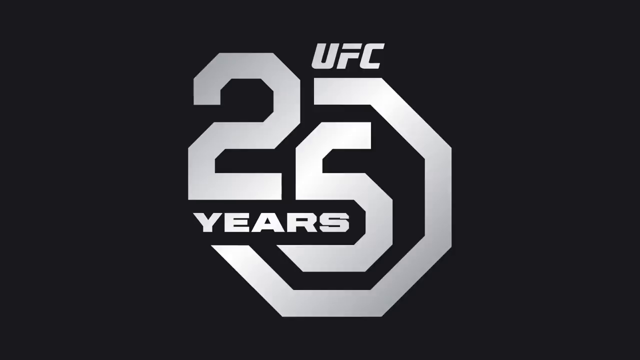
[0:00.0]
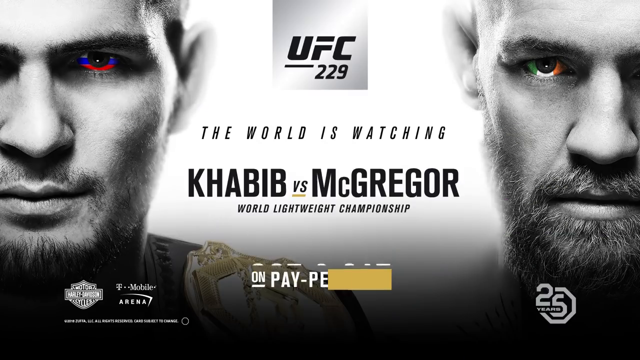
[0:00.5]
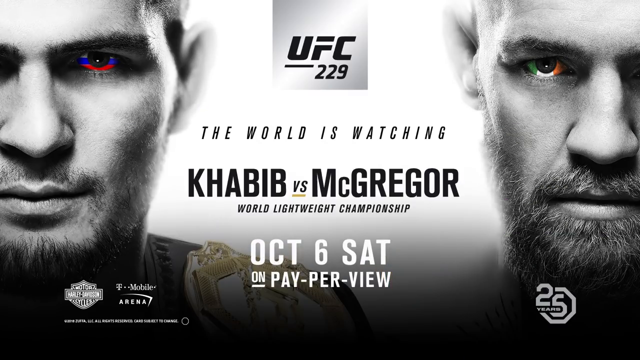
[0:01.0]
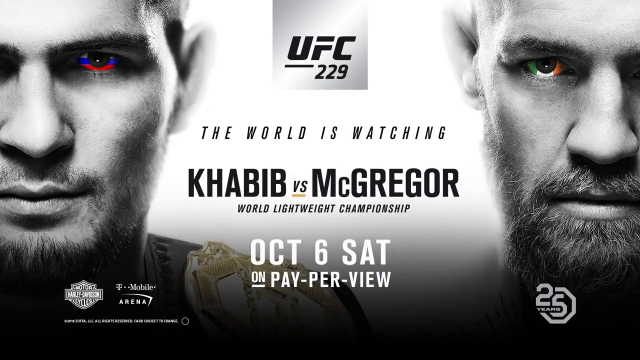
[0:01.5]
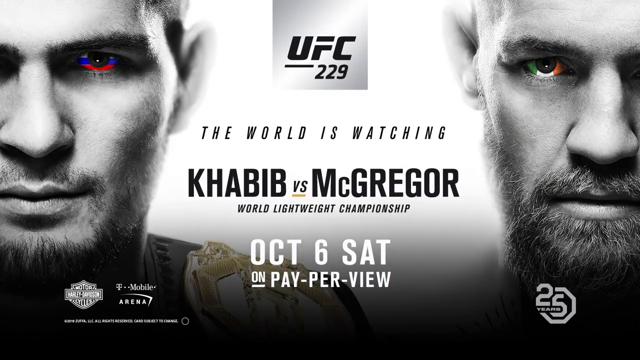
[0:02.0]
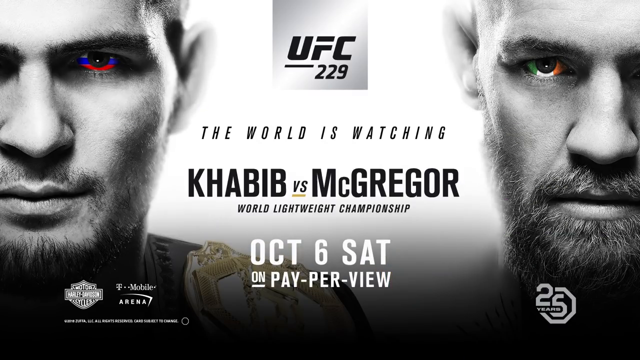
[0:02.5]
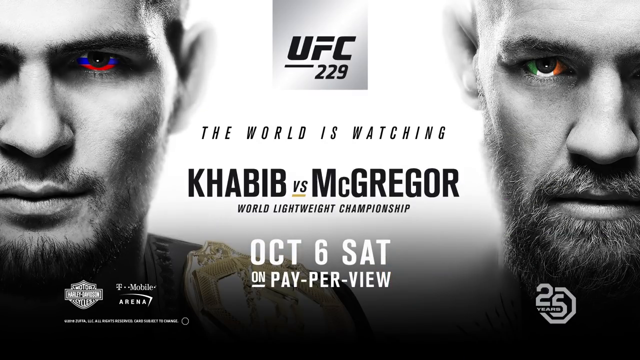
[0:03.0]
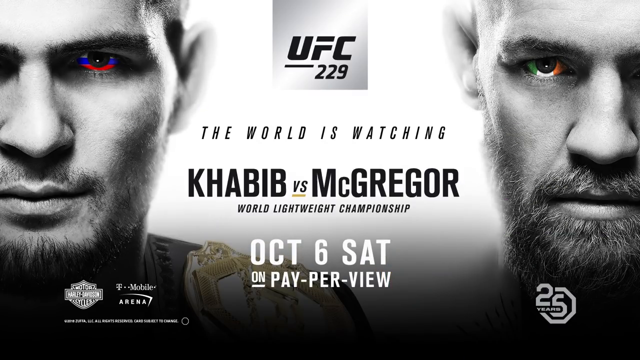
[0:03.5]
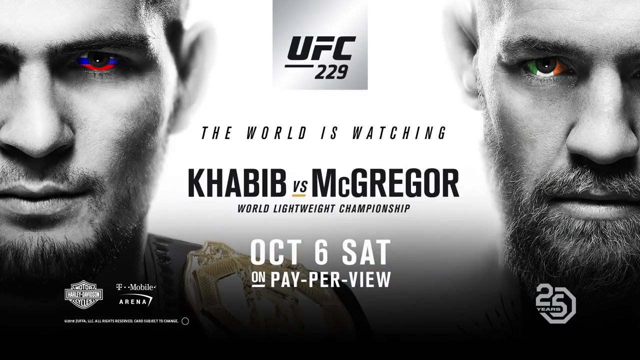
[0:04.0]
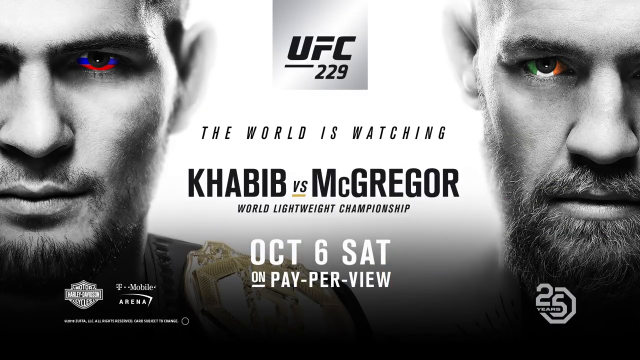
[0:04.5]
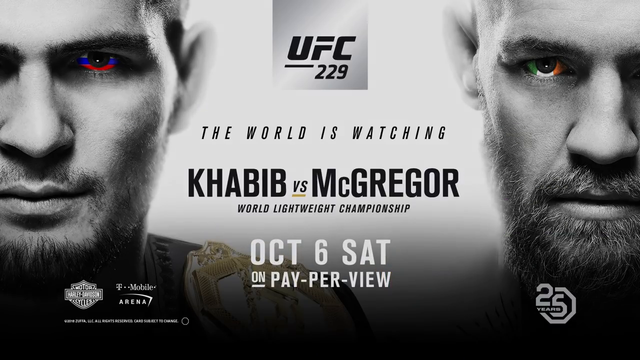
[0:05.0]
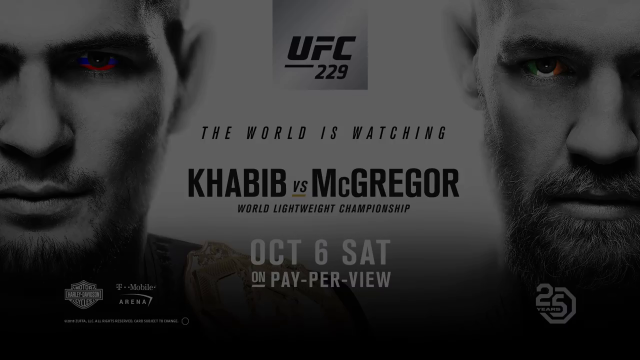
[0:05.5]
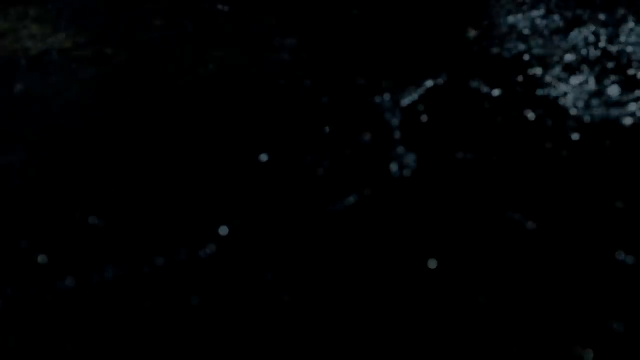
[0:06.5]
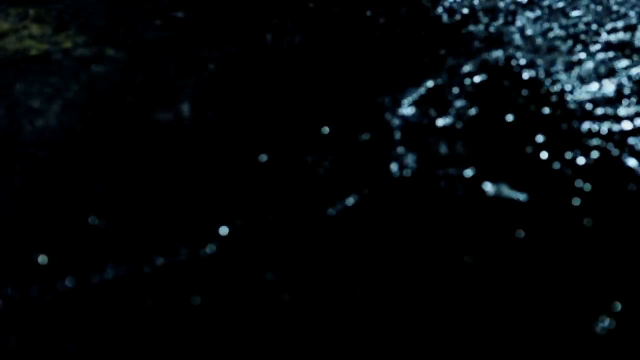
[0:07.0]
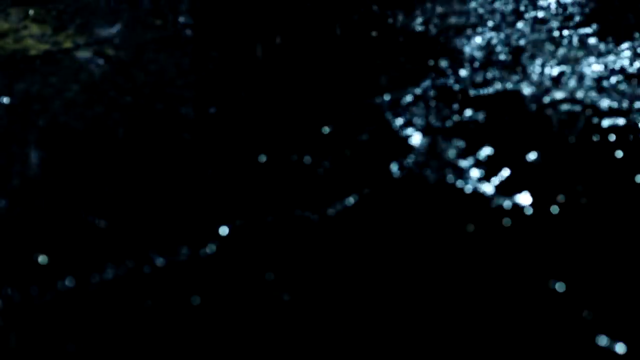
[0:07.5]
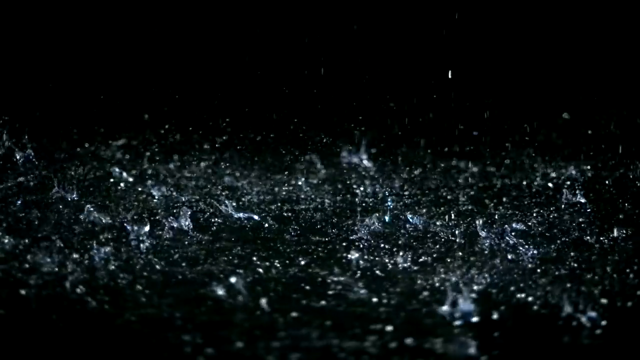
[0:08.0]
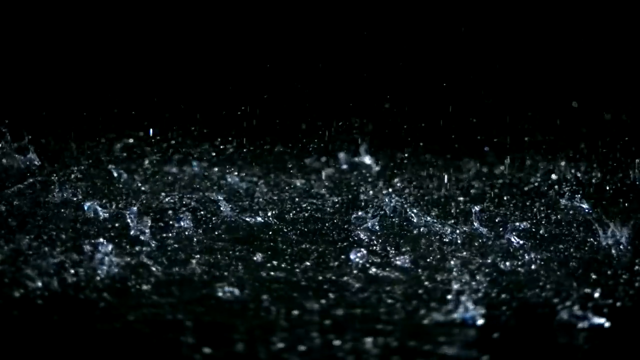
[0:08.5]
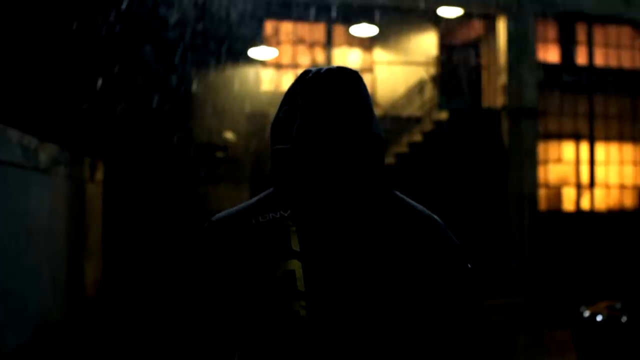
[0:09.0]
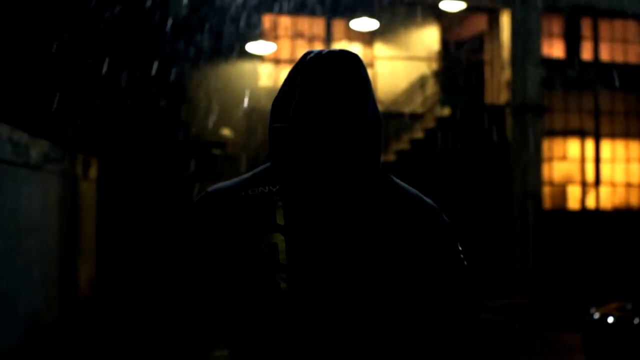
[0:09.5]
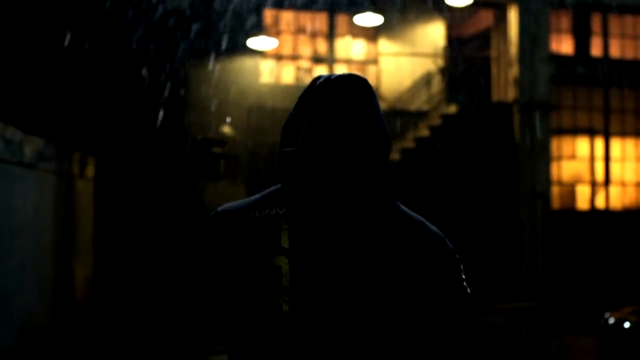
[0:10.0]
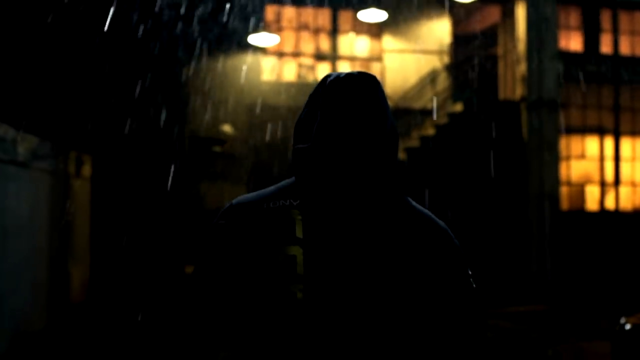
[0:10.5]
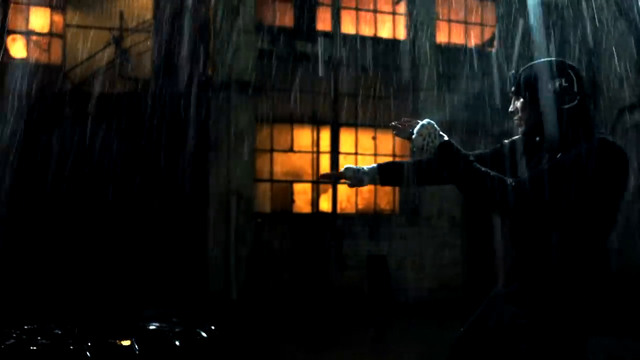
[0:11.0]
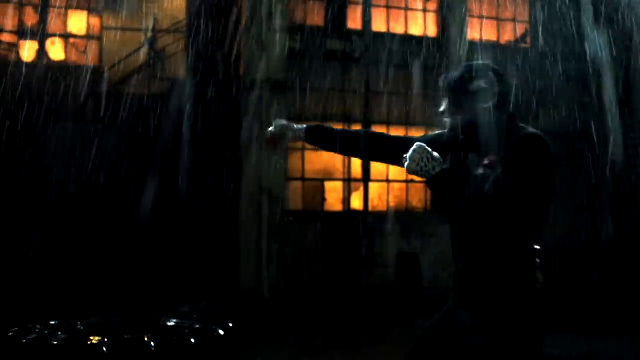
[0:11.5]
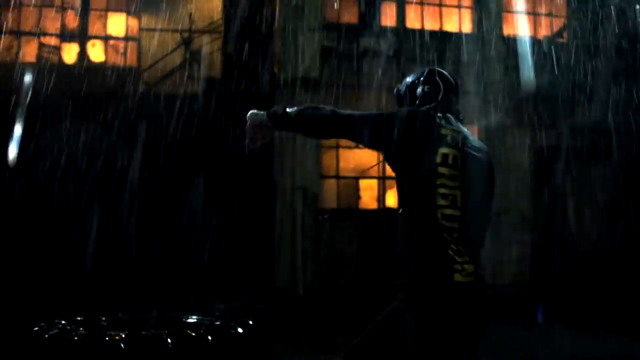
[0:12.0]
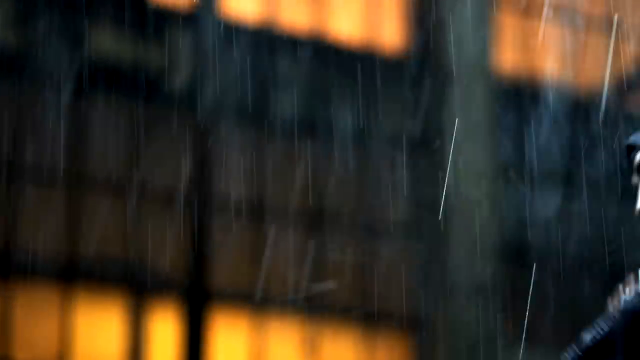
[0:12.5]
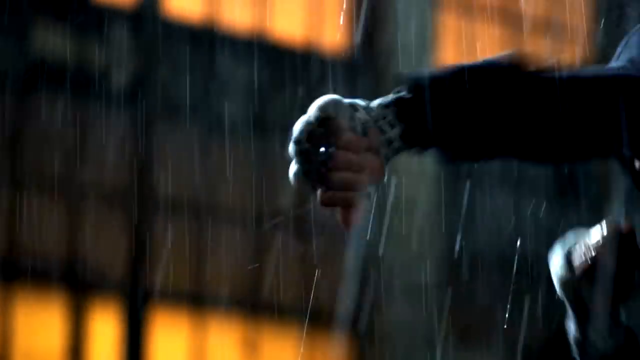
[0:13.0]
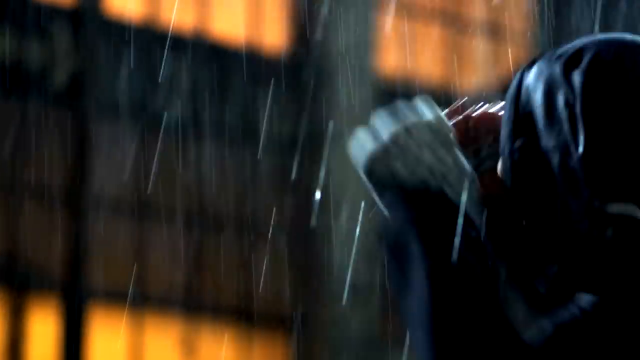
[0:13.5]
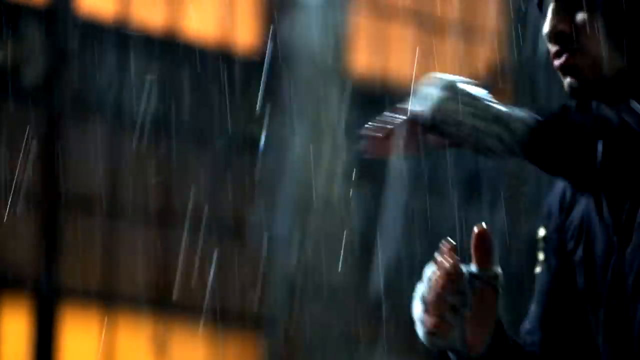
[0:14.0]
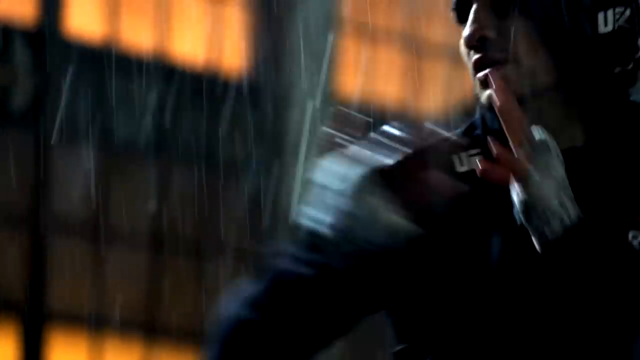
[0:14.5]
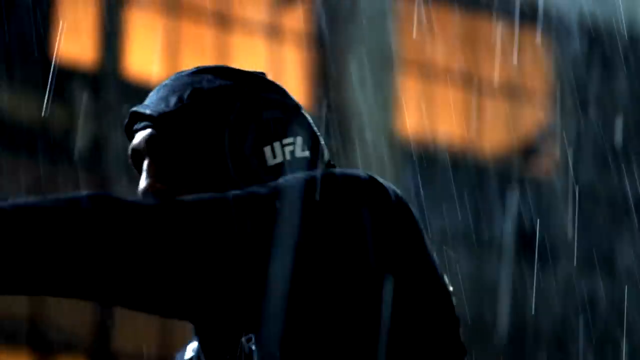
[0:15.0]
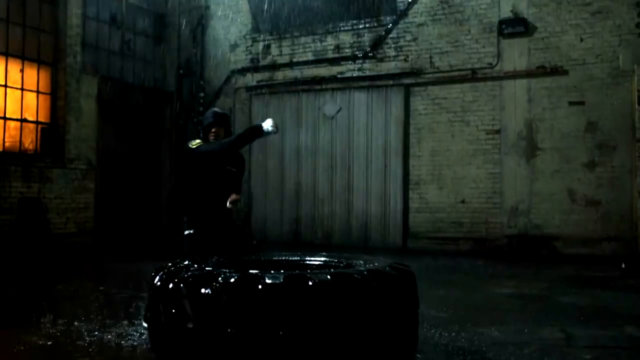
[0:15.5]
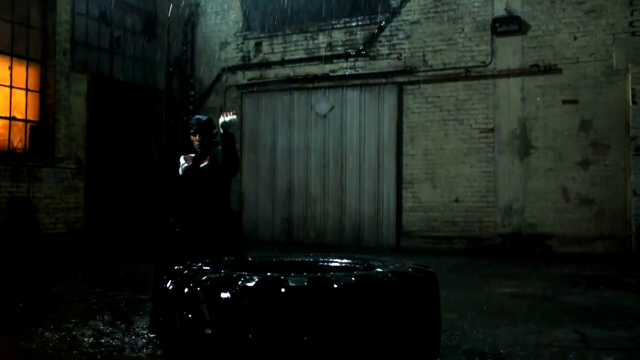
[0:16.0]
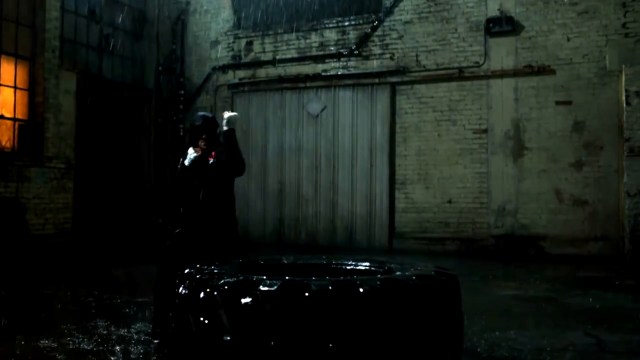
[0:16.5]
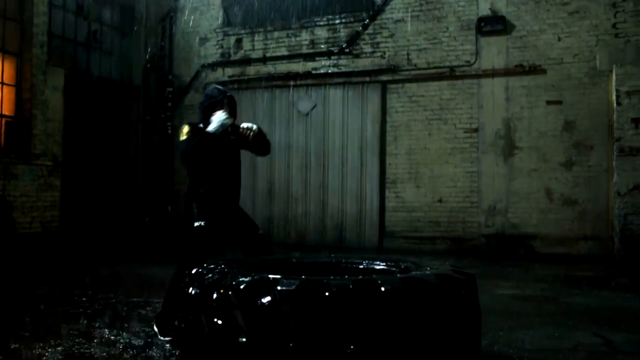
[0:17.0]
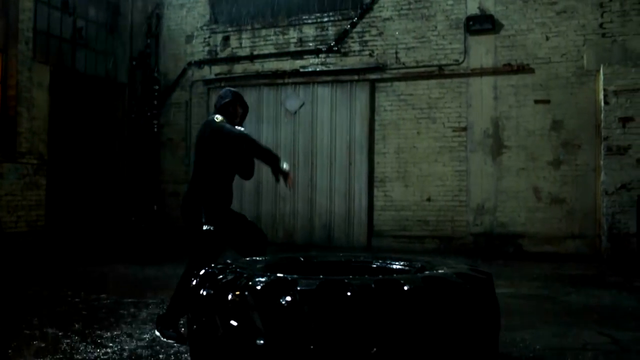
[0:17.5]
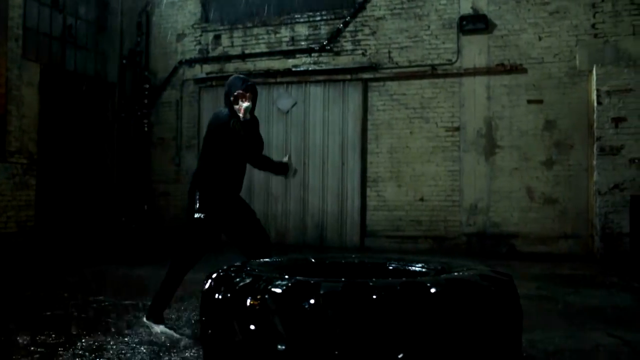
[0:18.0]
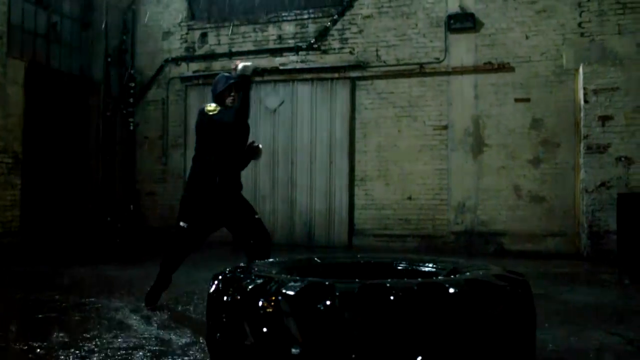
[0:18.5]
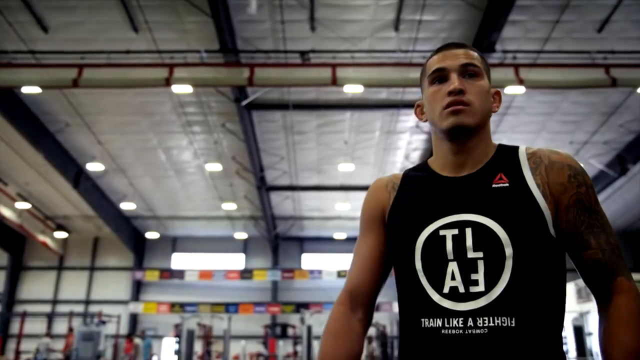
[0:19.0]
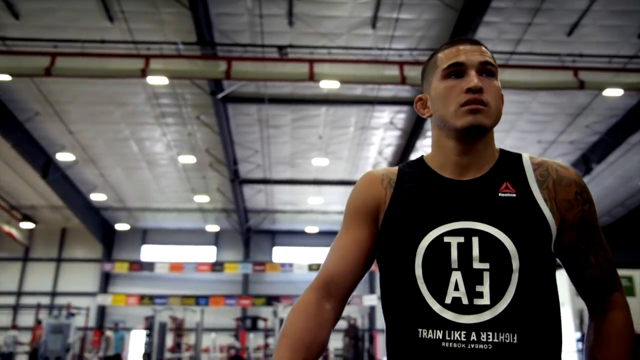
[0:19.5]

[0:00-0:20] The video opens on a black background with "UFC 25 years" in a silver artistic font and what is kind of an icon. A splash screen with a white background follows, showing the faces of two UFC fighters on the left and right of the screen: on the left a man who looks kind of Arab, on the right a bearded white man. At the very top between them is "UFC 229" in black font, below that "the world is watching", below that "Khabib versus McGregor", below that "world lightweight championship", and below that, in white font, "October 6 Saturday on pay-per-view". The splash screen stays up for a few seconds. Next, what looks like rain hits the ground, and a man wearing a hoodie punches the air in the rain in front of a large tire. Then a man resembling the man on the left of the splash screen appears, wearing a tank top with "TLAF" in a white circle on the chest.